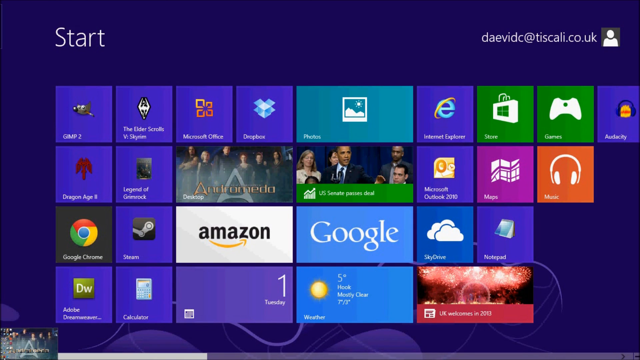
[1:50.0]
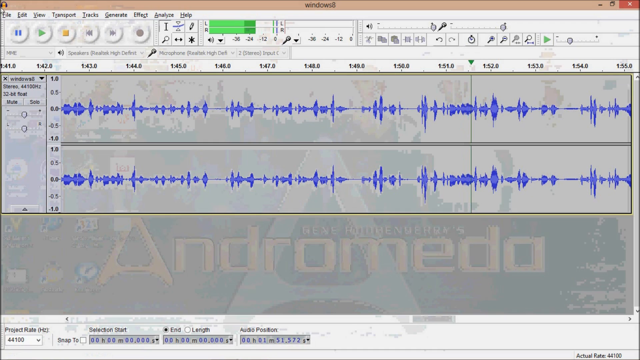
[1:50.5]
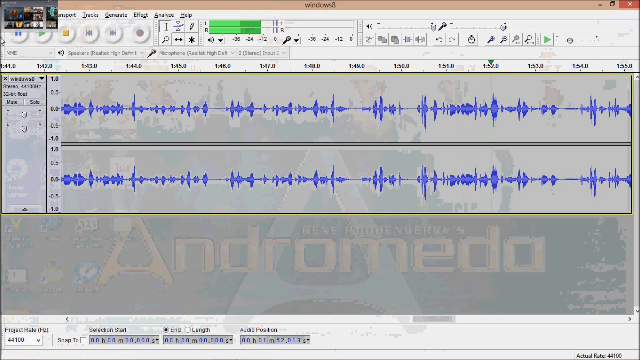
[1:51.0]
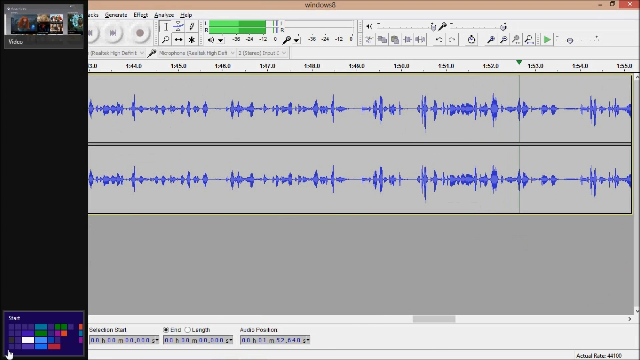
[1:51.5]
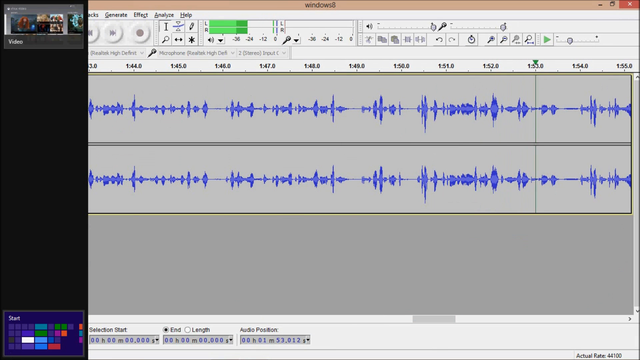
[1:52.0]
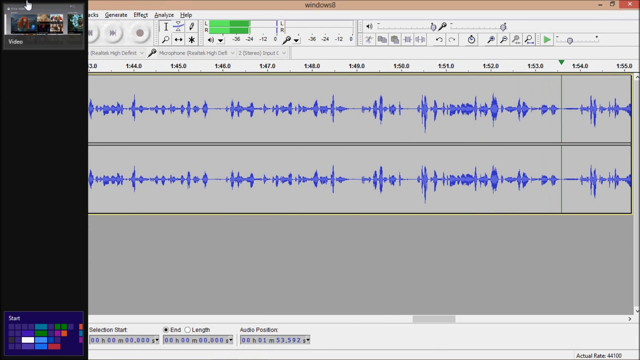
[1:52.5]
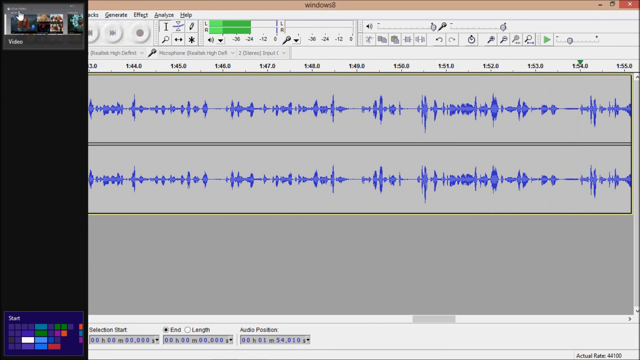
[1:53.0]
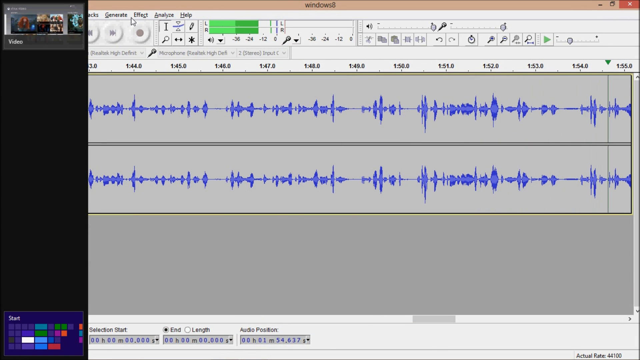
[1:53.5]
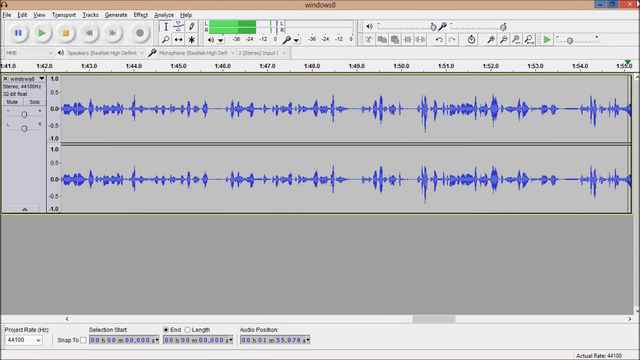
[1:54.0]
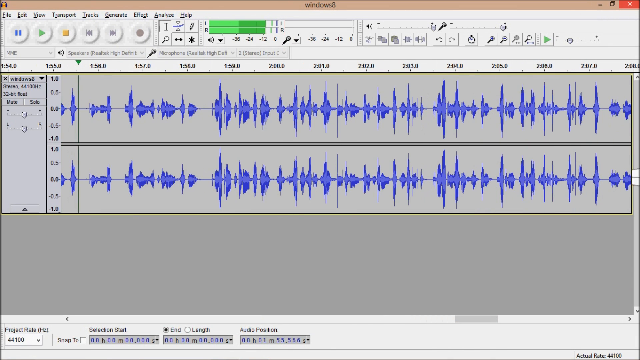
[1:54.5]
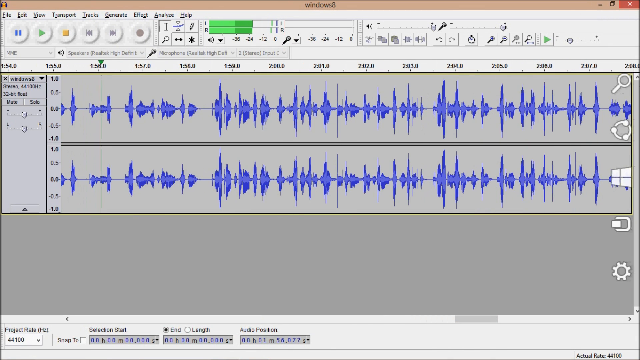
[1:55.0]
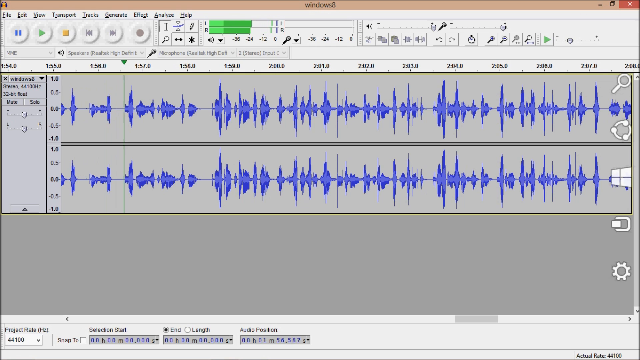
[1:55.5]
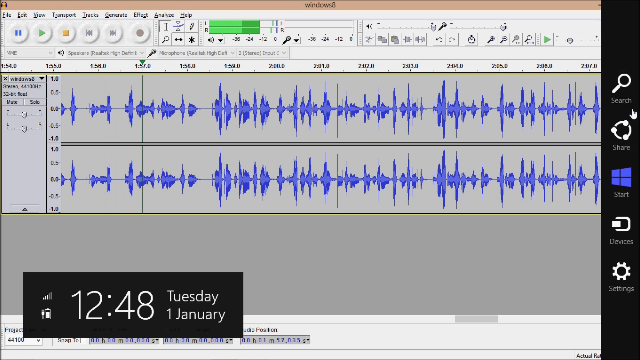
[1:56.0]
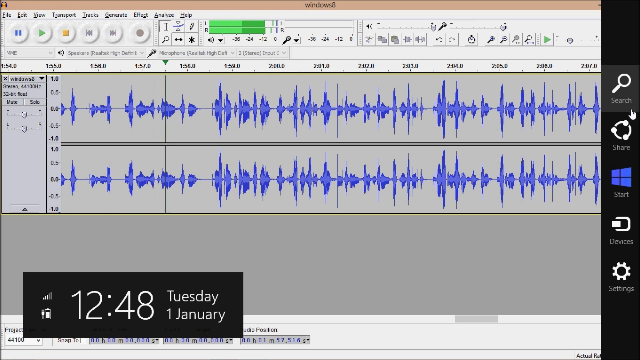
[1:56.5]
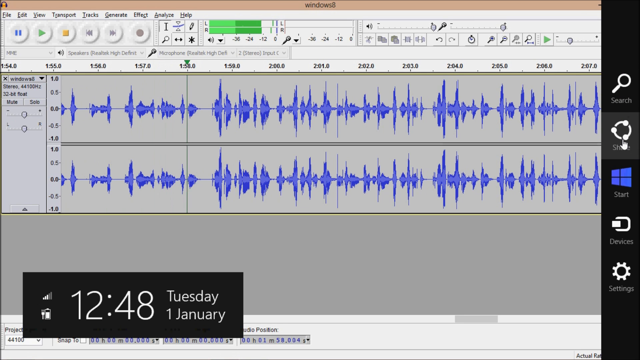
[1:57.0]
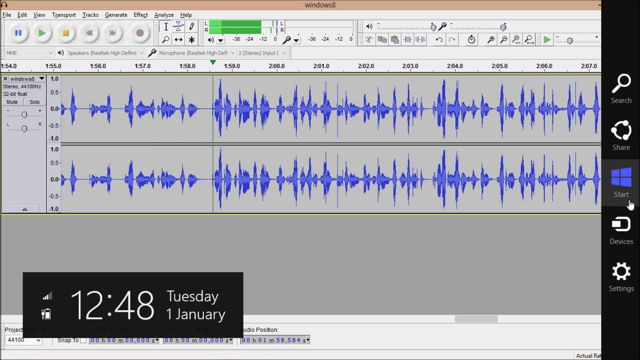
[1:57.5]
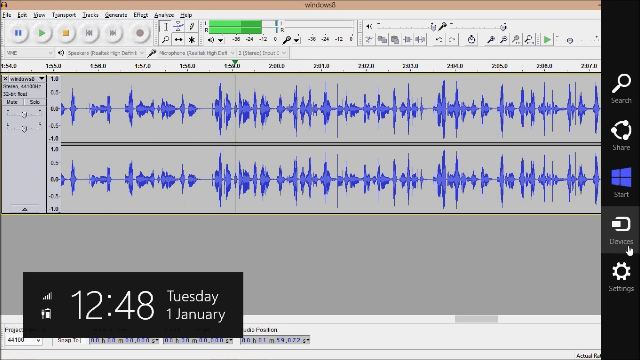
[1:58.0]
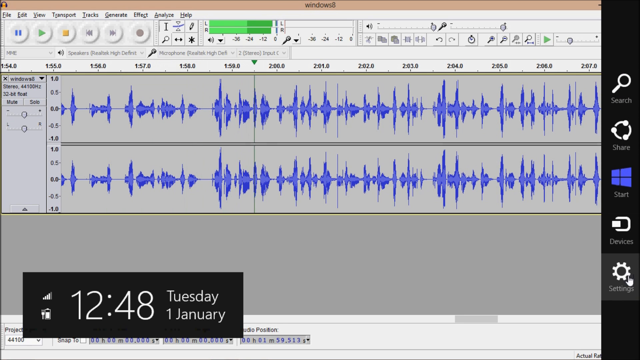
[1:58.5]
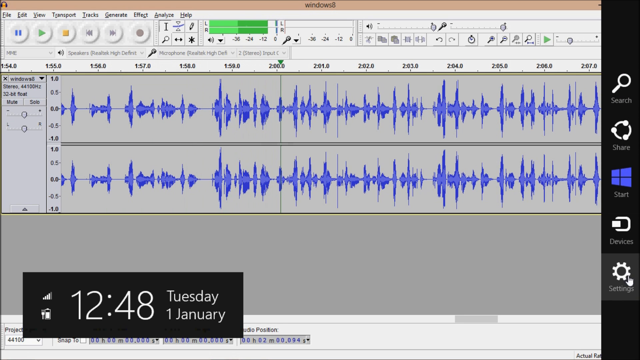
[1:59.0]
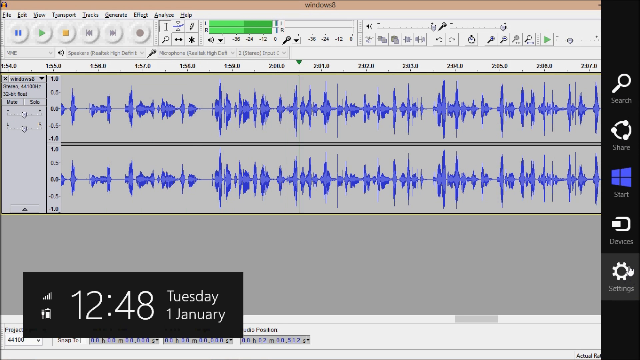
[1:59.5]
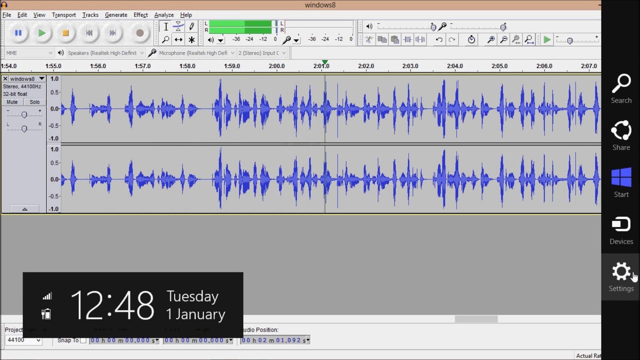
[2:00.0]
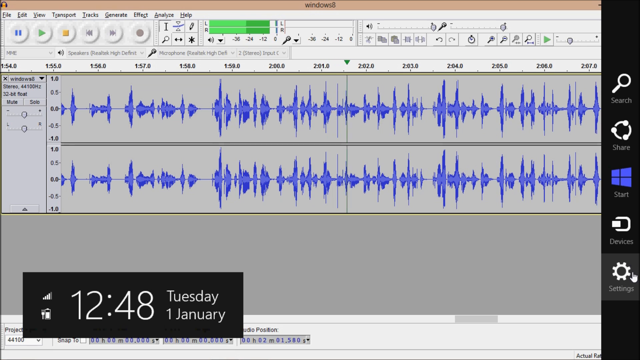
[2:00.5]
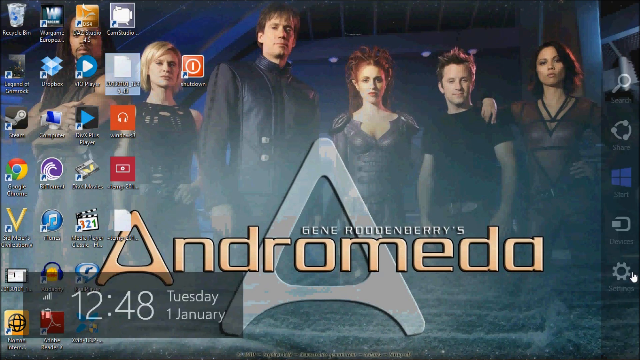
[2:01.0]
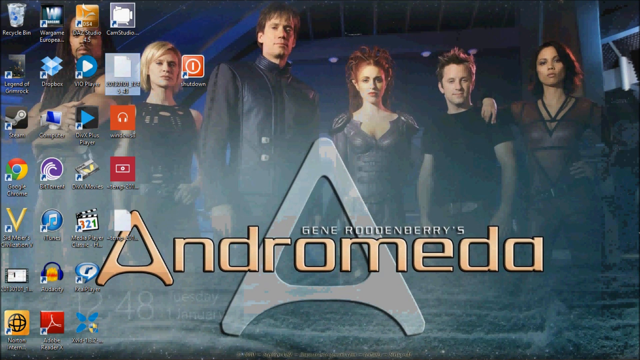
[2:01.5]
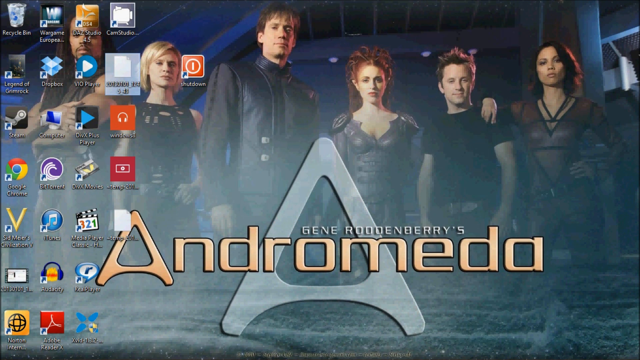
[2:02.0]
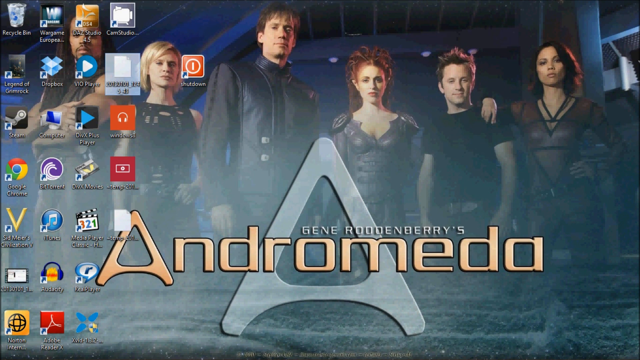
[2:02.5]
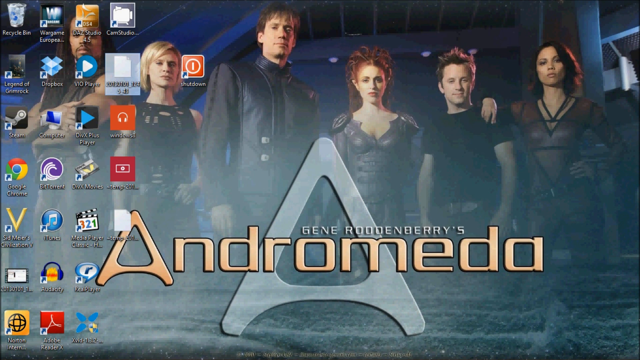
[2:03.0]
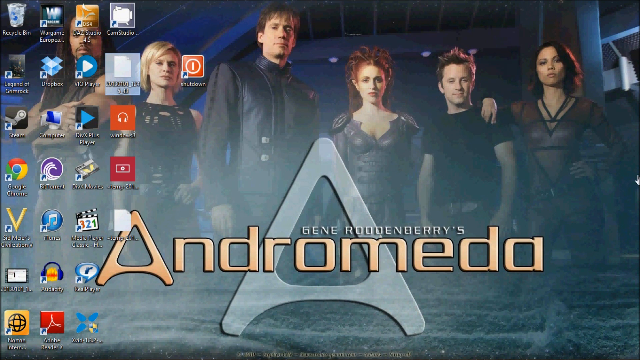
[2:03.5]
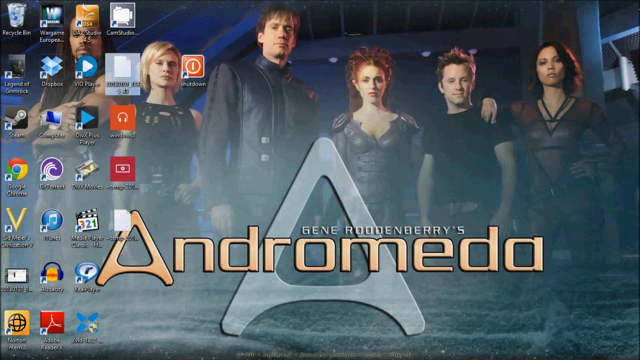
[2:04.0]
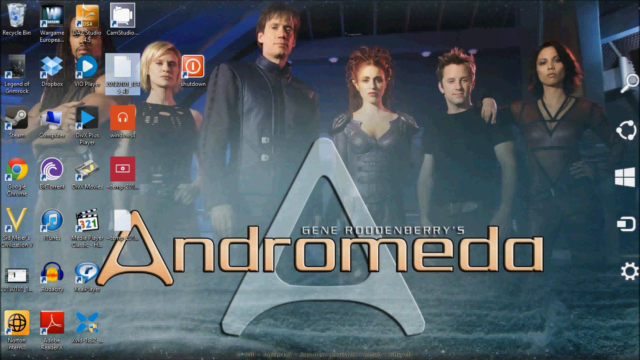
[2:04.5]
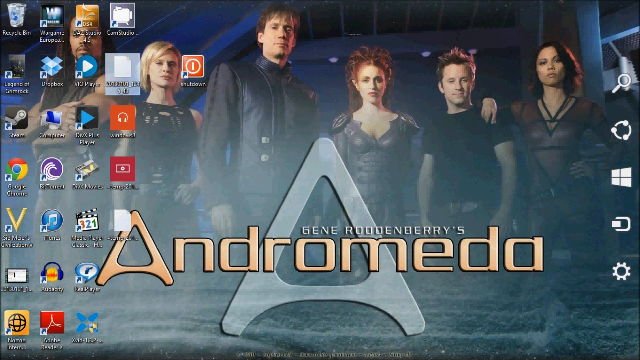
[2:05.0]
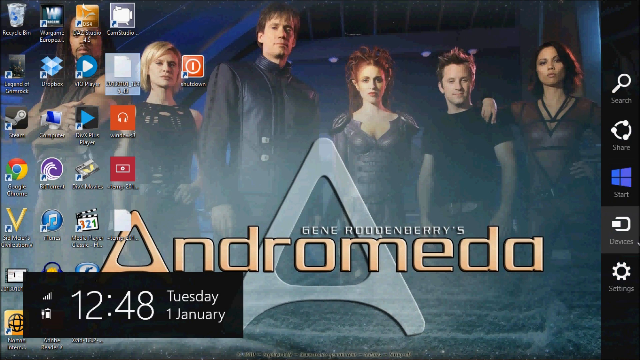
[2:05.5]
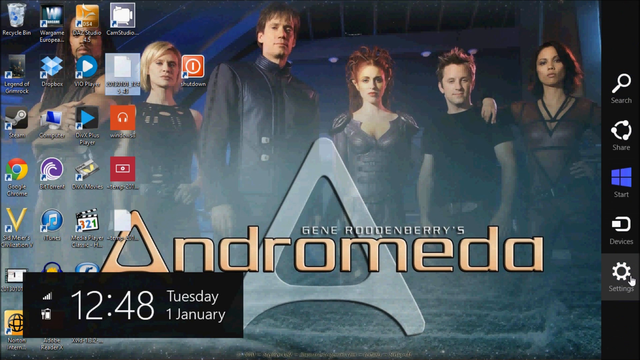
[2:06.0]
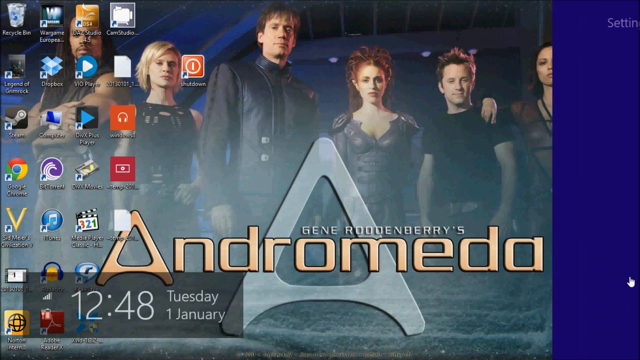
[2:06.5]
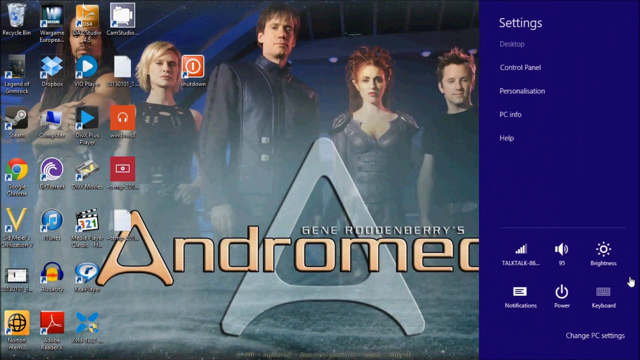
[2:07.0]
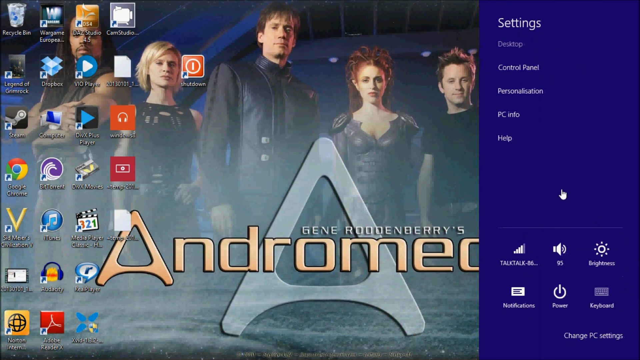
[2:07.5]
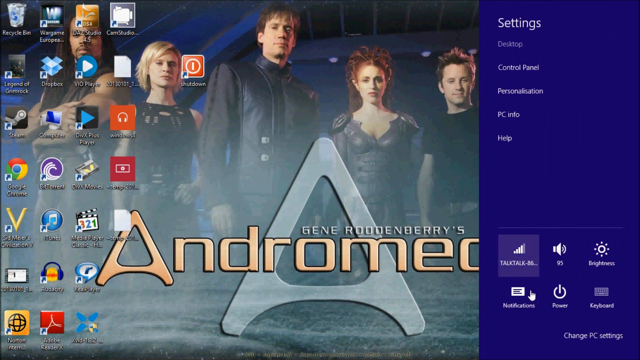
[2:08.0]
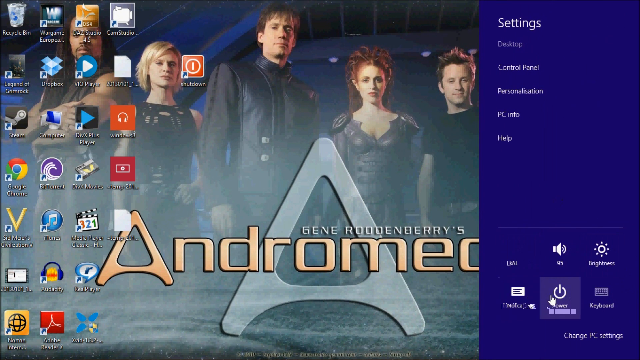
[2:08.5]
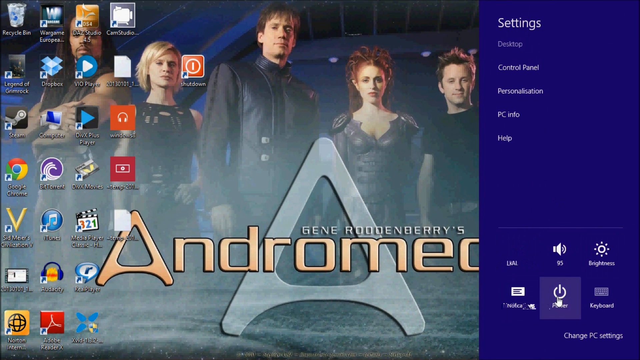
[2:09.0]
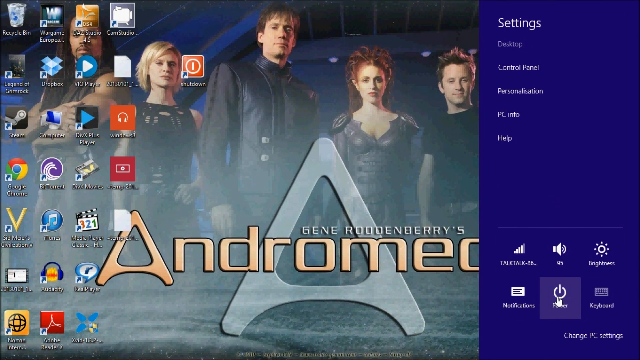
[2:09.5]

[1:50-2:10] The user platform is displayed briefly until the user opens the Audacity app window. A side window comes up that looks like where the files are kept to be manipulated in Audacity. It seems to be playing, since the levels at the top move up and down on the left and the right, and the meter moves up from the start position. The time pops out, showing 12:48 on Tuesday, January 1st. On the right-hand side, options such as devices and settings are available, and the person highlights settings. It seems they click on it, which closes the box and takes them to the home screen. They click the settings cog again, bringing it back out and showing some of its items, including typical settings such as power.